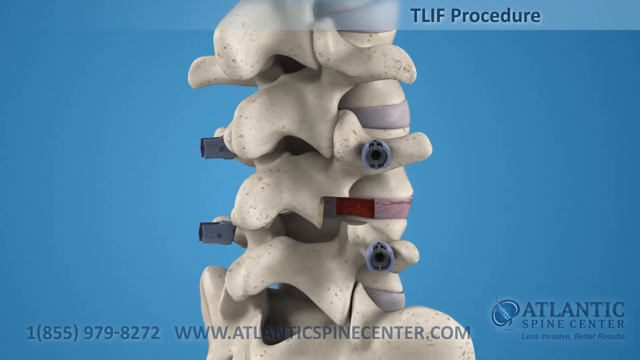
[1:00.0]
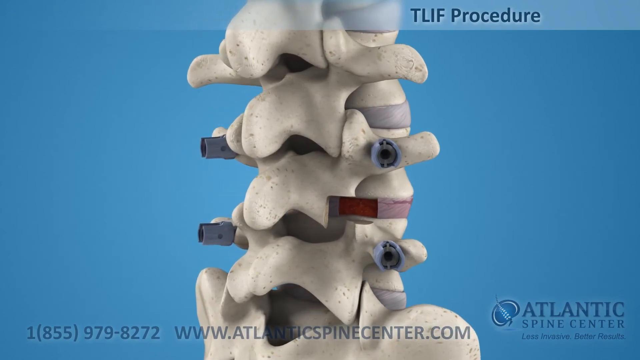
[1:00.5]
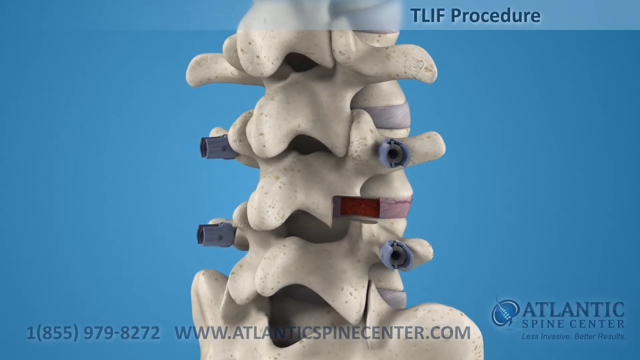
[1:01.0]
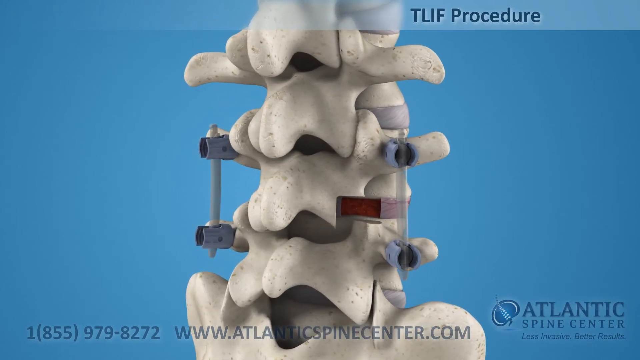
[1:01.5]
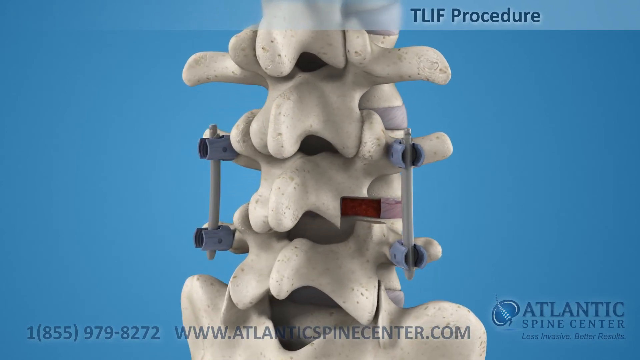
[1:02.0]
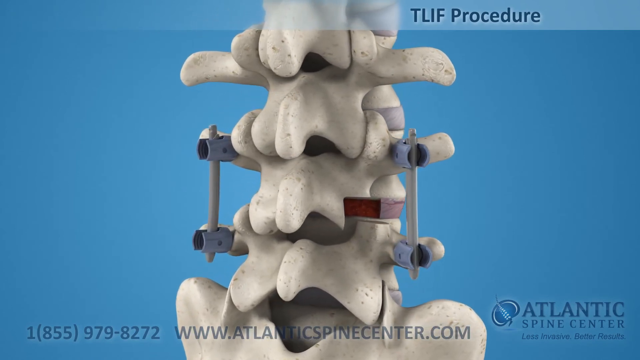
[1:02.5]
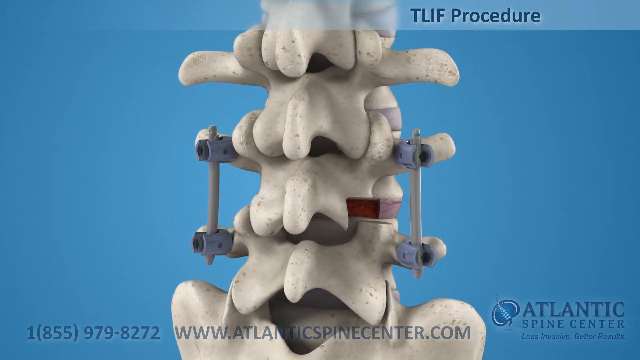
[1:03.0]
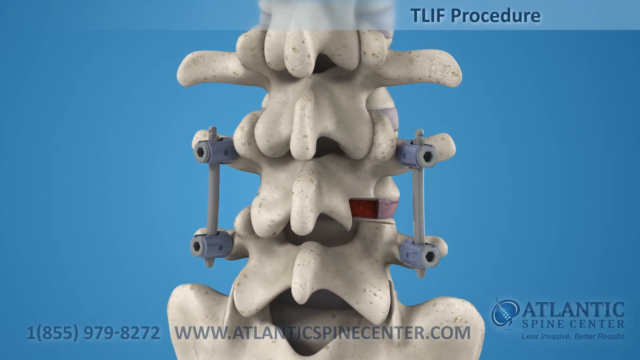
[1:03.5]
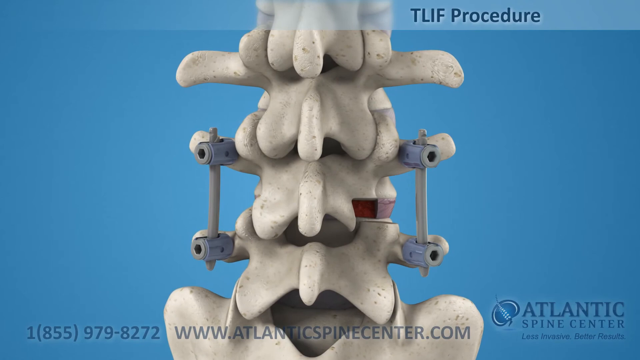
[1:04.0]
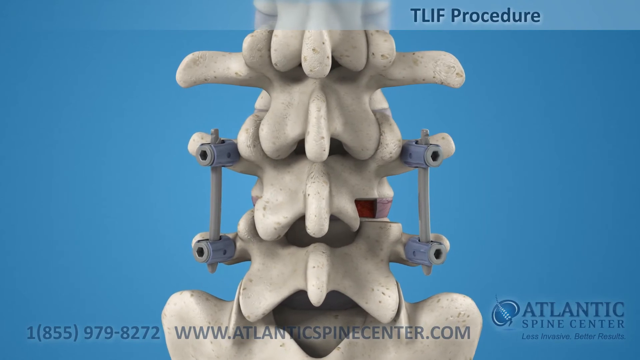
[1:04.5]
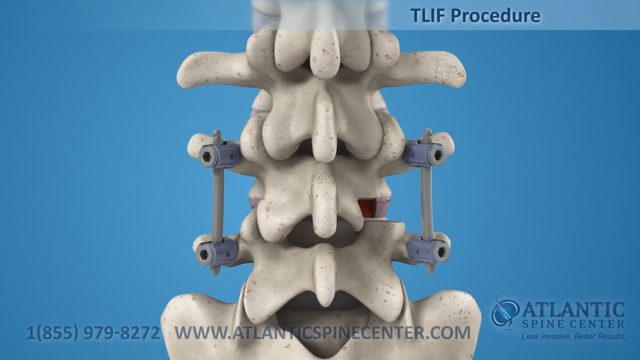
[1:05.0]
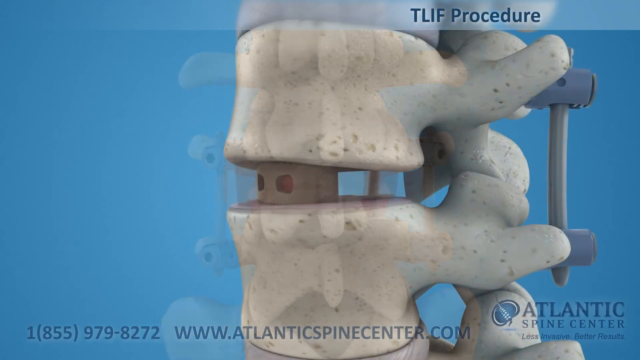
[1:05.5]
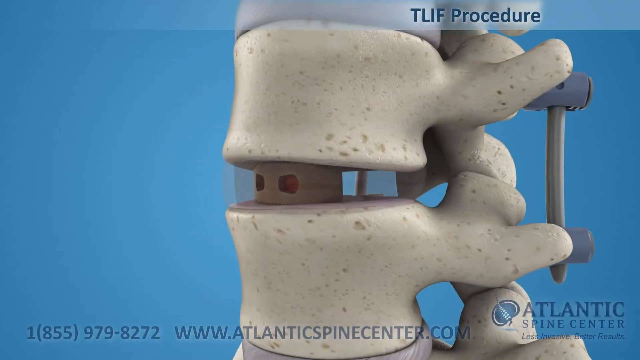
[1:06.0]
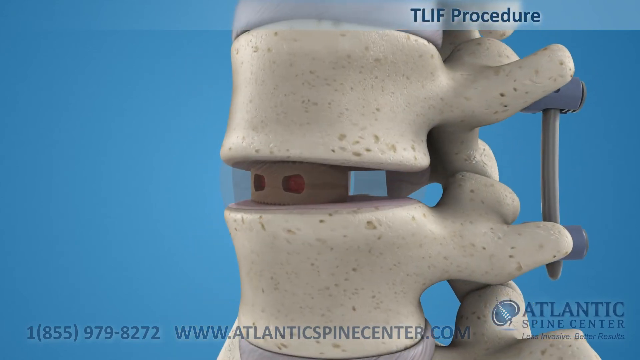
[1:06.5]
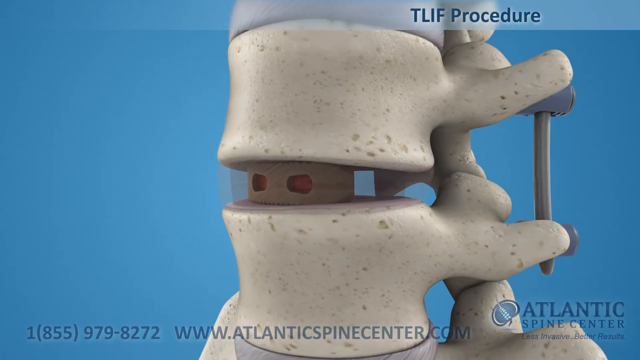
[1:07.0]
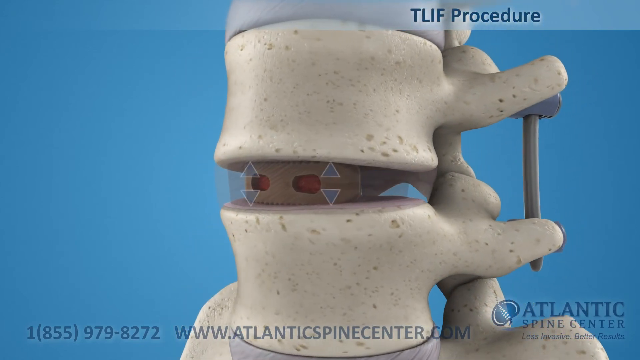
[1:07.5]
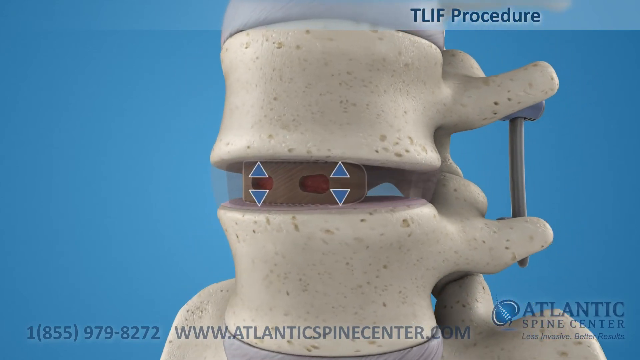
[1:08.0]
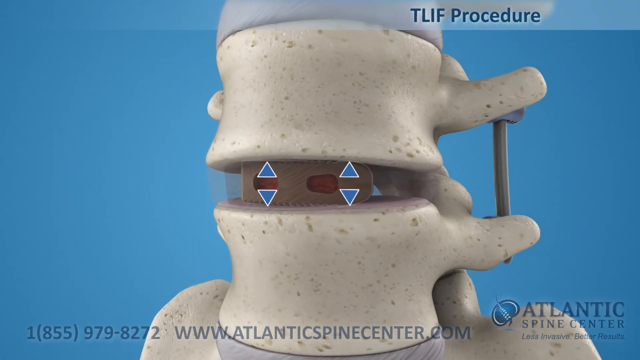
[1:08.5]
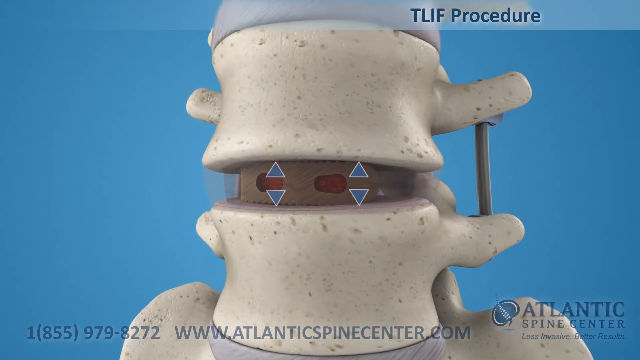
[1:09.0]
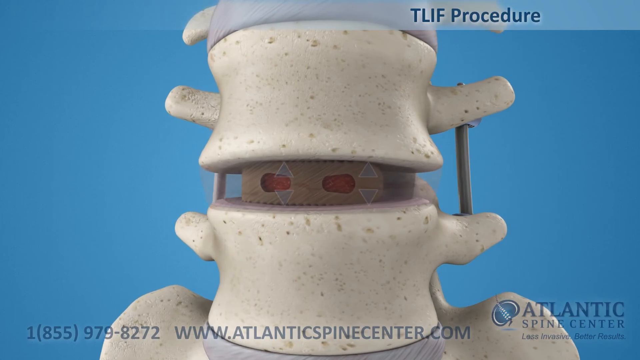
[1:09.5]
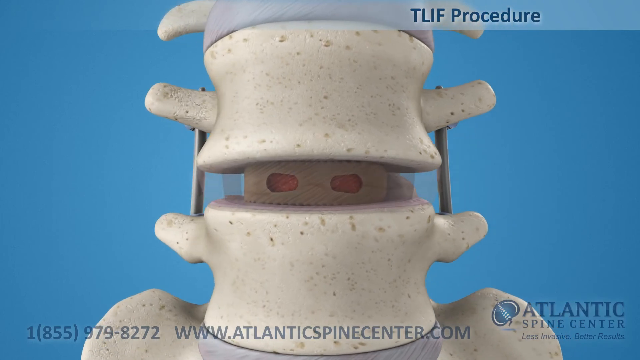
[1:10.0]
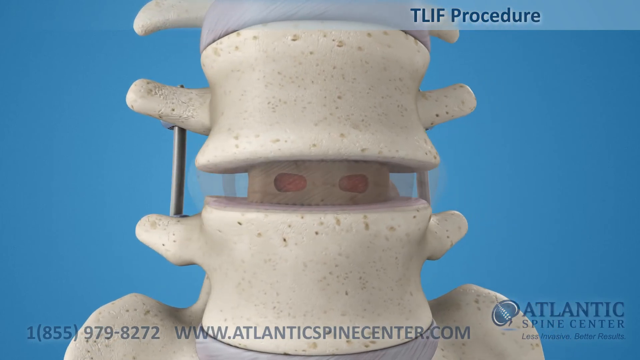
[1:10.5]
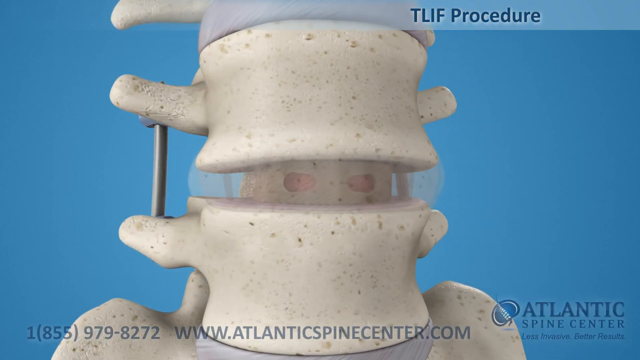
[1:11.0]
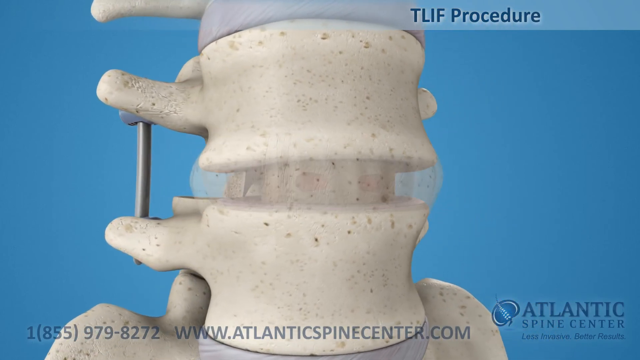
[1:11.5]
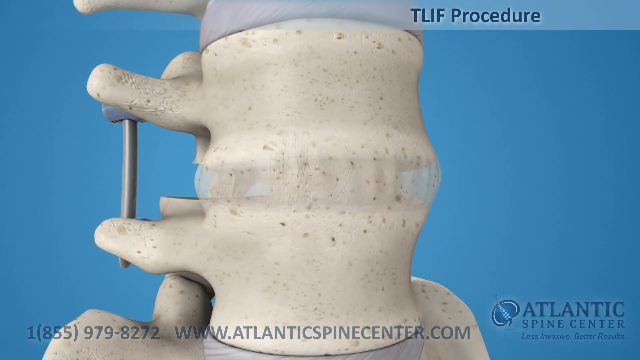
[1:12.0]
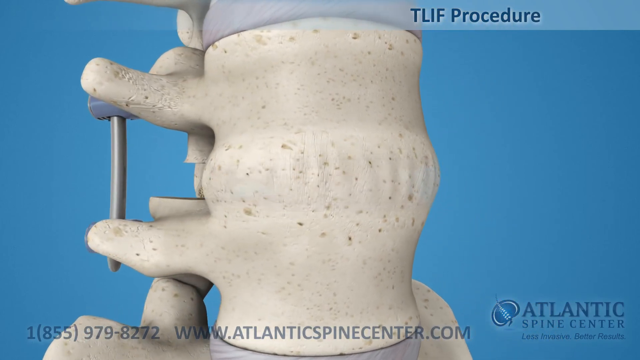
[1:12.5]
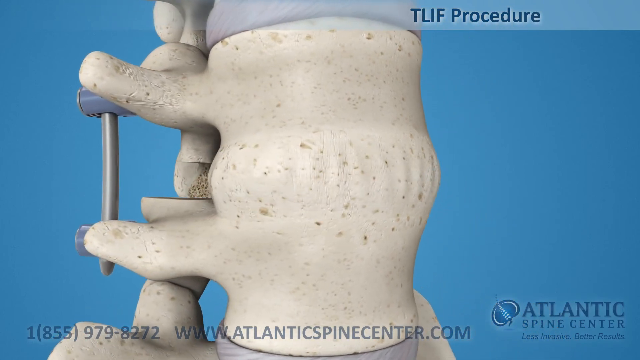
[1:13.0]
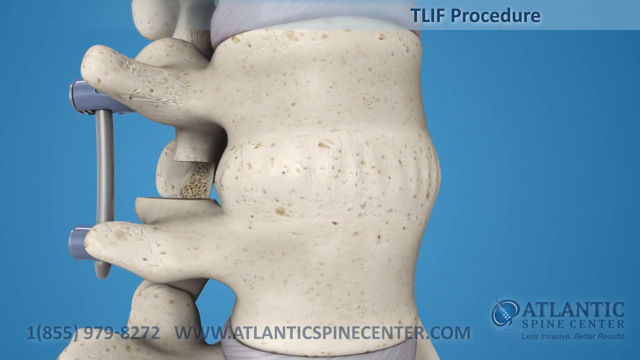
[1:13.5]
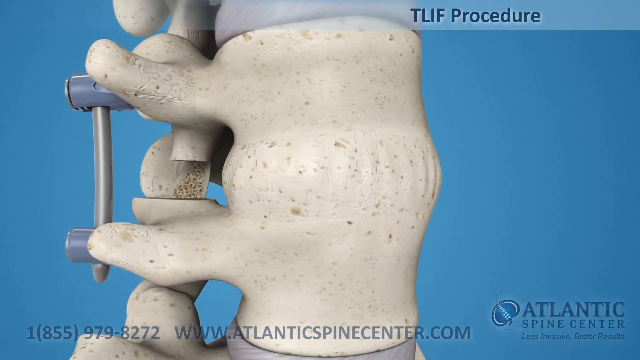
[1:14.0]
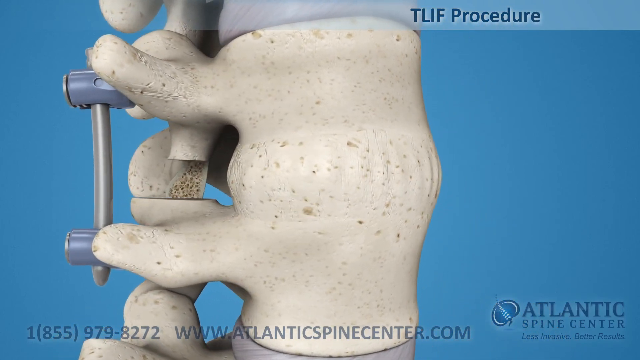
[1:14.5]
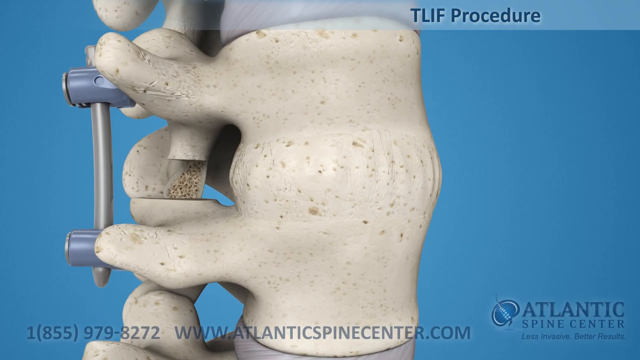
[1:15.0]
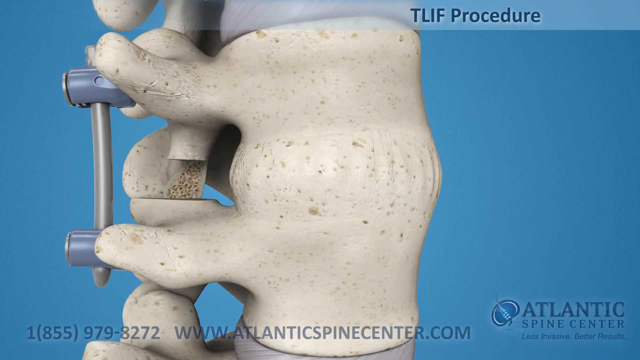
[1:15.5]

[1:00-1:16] The letters "T-L-I-F" are in the upper right corner of the video. The view remains zoomed in on the spine and its vertebrae, which are moving around, showing the medical devices added to the left side of the vertebrae. Two screws appear to have been inserted in a column-like formation, connected by a silver metal bar on either side of the spine. The vertebrae and spine continue to turn until the view is of the back side of the spine. It keeps turning and the video zooms in further, showing the opposite side, where the medical device has been inserted into the disc. The beige and red medical device is inserted between the two discs, and blue arrows, one pointing up and one pointing down, are on the left side and the right side of the disc.